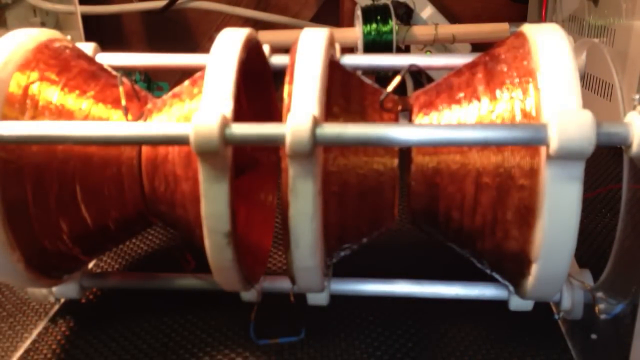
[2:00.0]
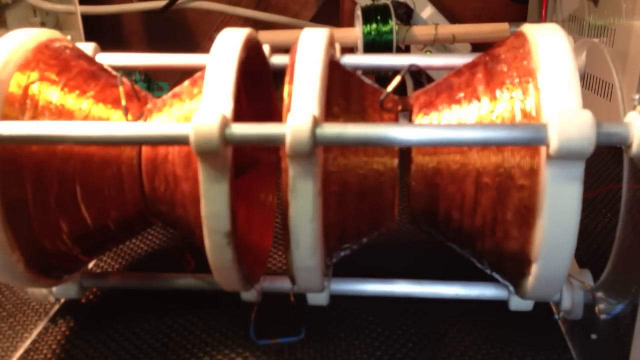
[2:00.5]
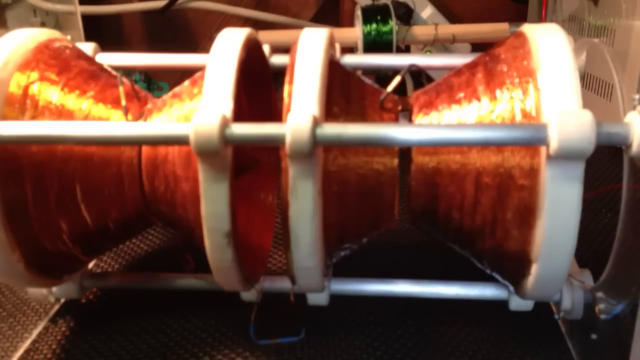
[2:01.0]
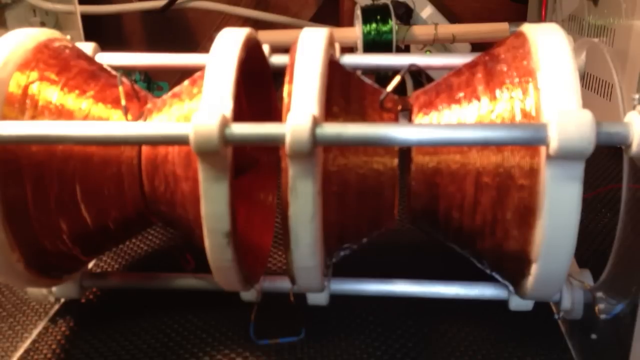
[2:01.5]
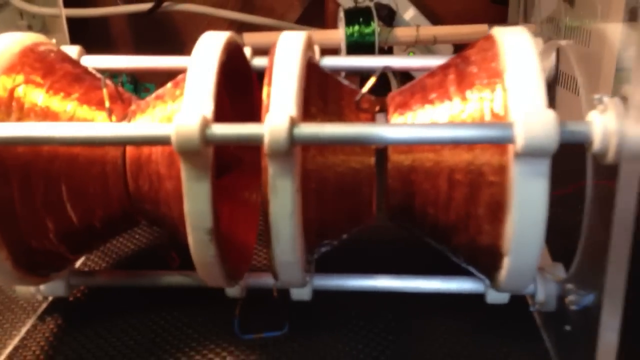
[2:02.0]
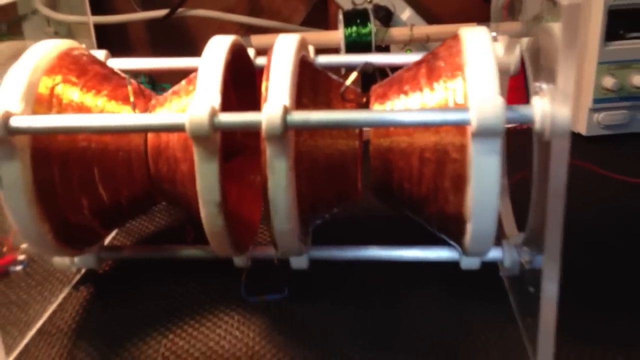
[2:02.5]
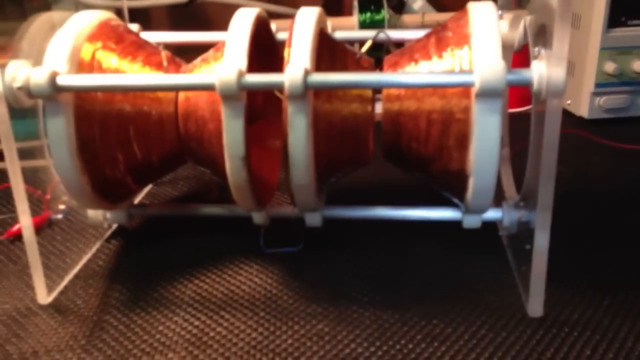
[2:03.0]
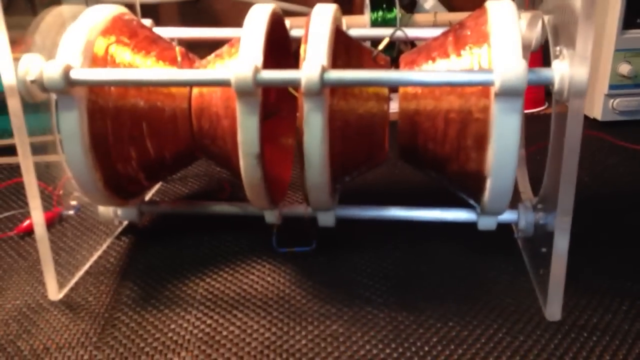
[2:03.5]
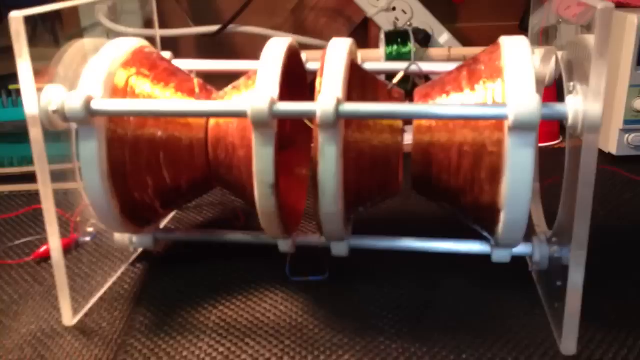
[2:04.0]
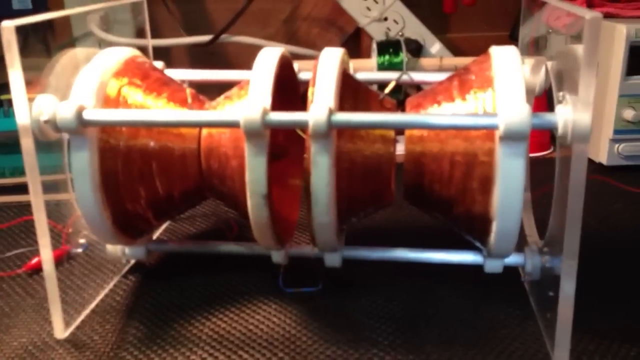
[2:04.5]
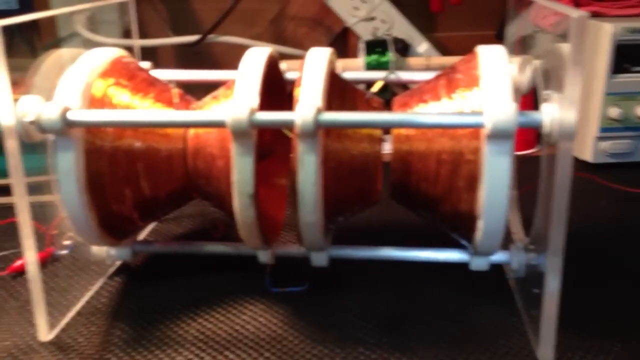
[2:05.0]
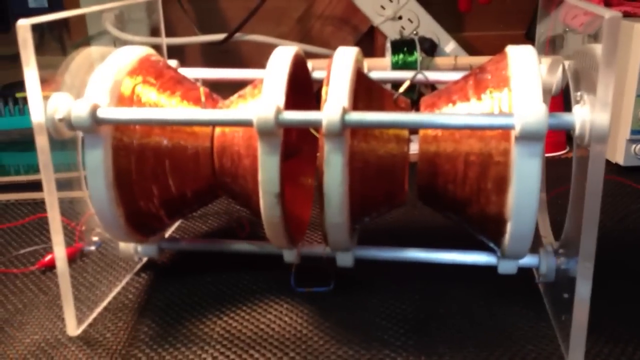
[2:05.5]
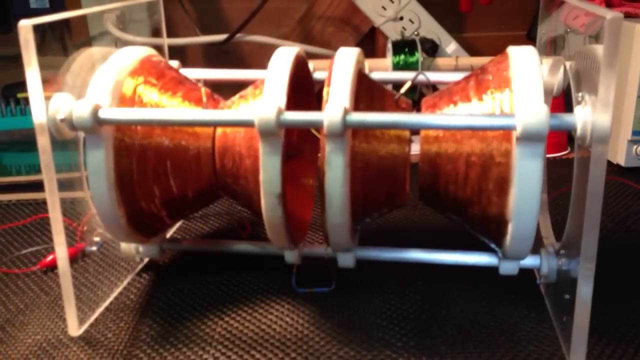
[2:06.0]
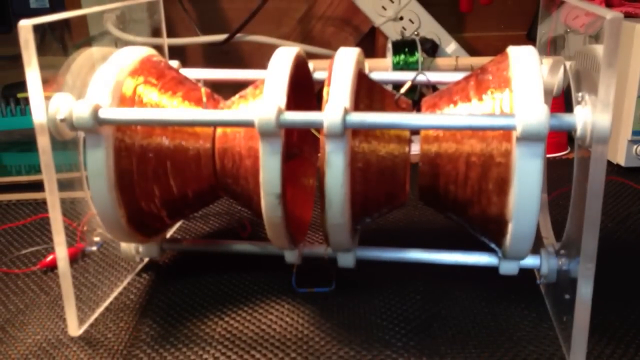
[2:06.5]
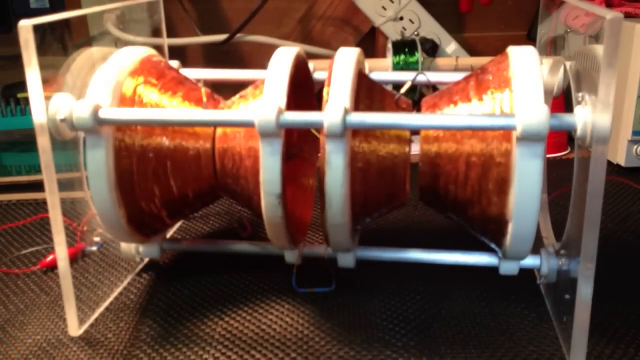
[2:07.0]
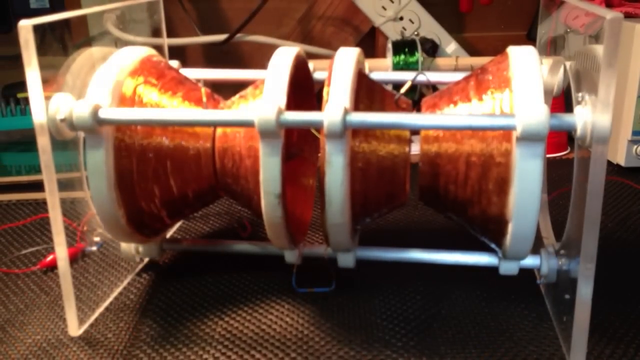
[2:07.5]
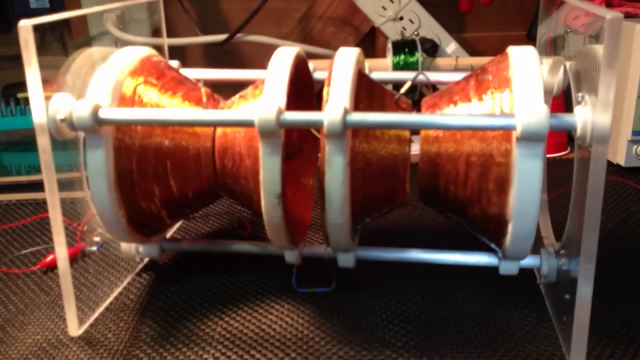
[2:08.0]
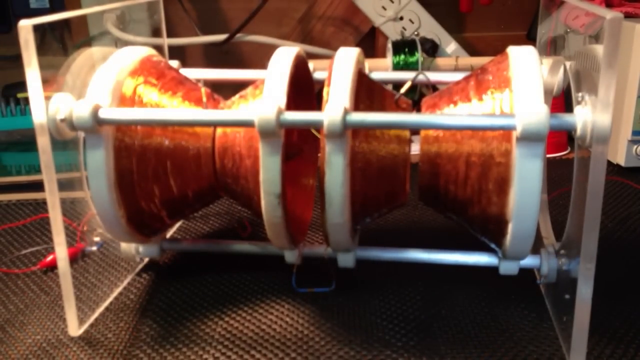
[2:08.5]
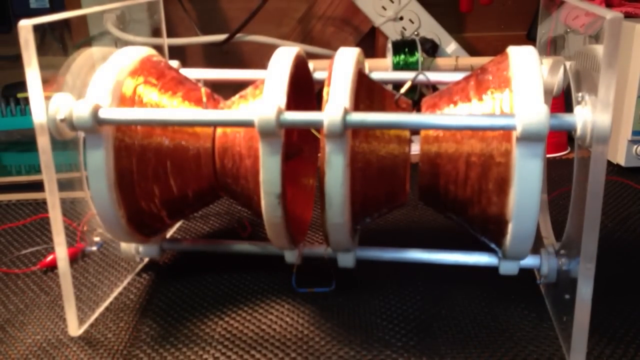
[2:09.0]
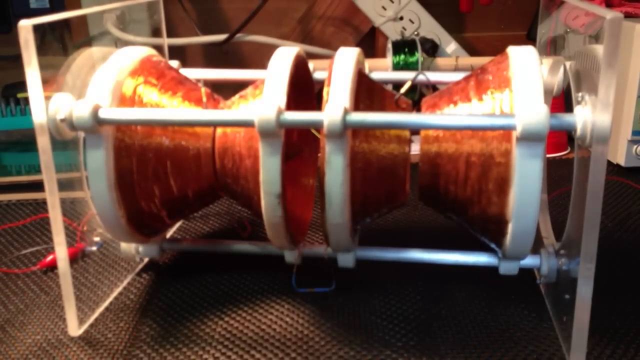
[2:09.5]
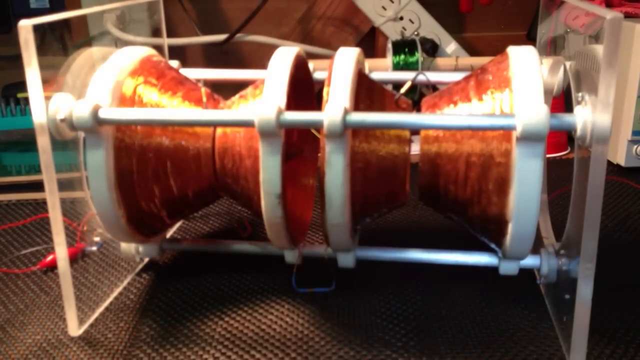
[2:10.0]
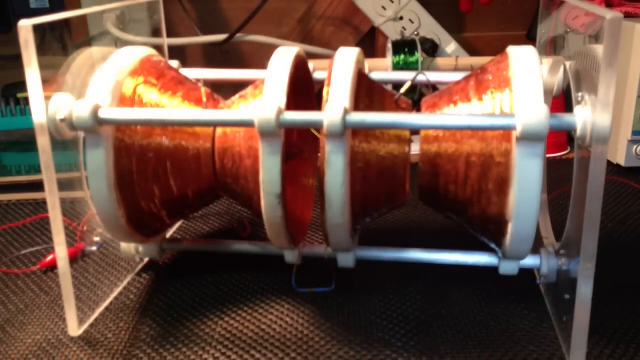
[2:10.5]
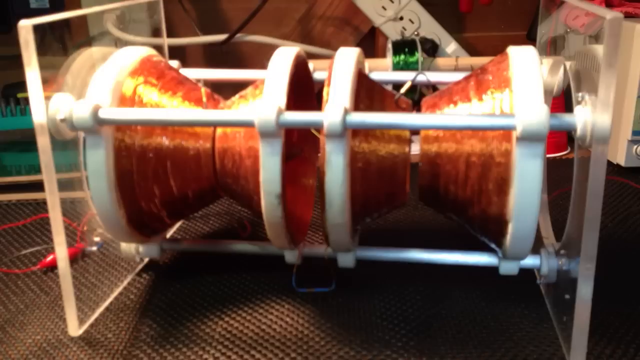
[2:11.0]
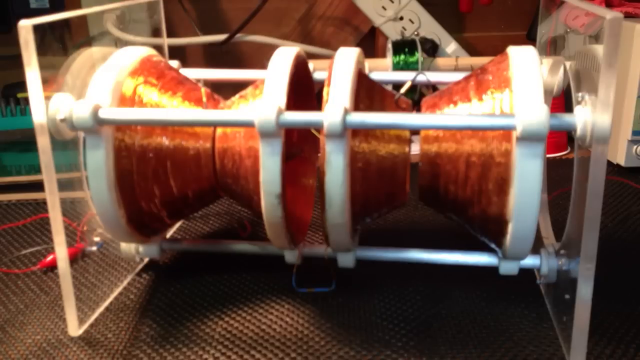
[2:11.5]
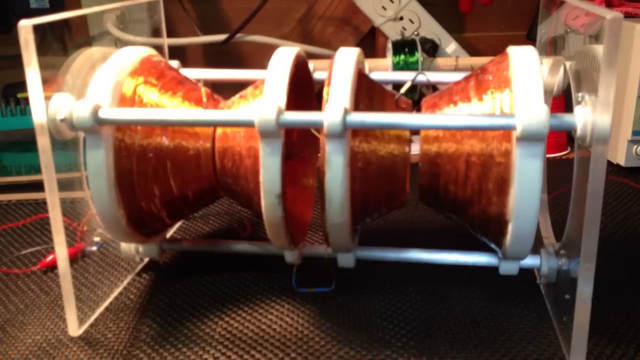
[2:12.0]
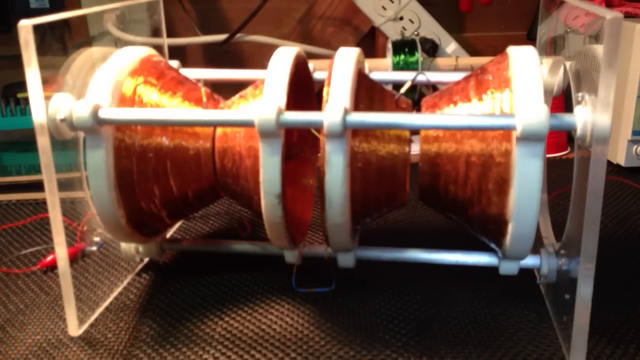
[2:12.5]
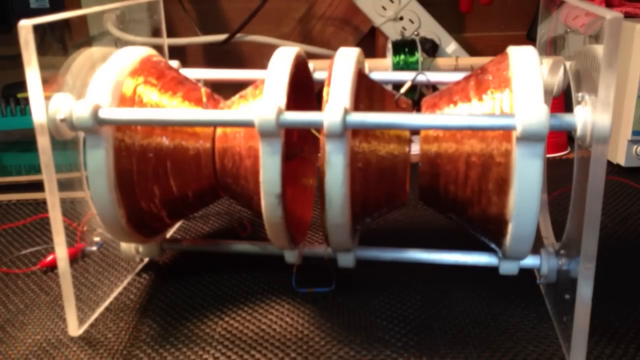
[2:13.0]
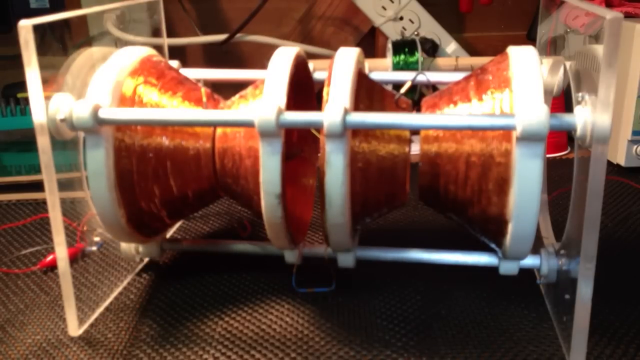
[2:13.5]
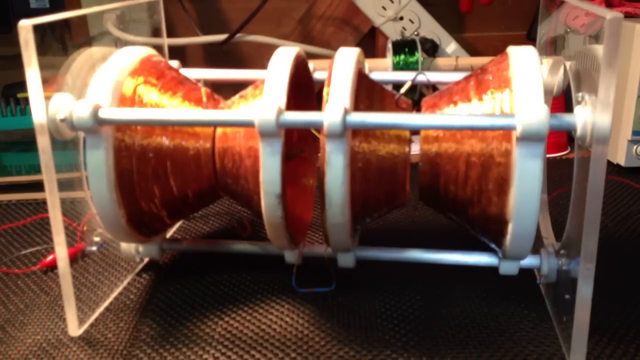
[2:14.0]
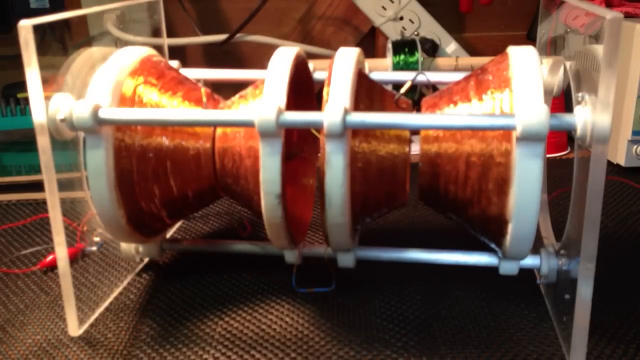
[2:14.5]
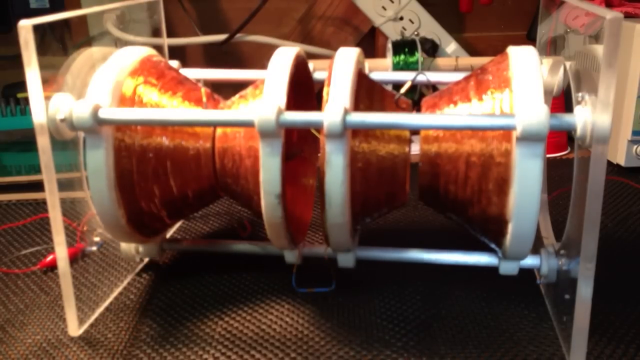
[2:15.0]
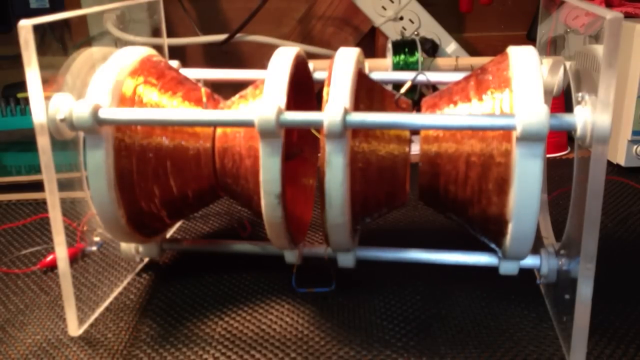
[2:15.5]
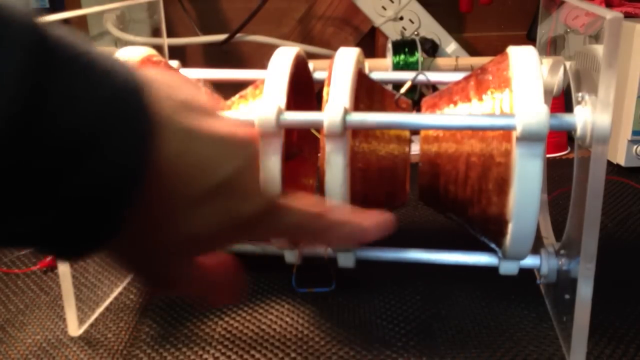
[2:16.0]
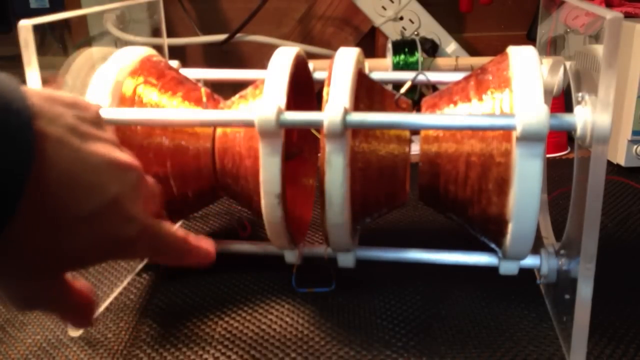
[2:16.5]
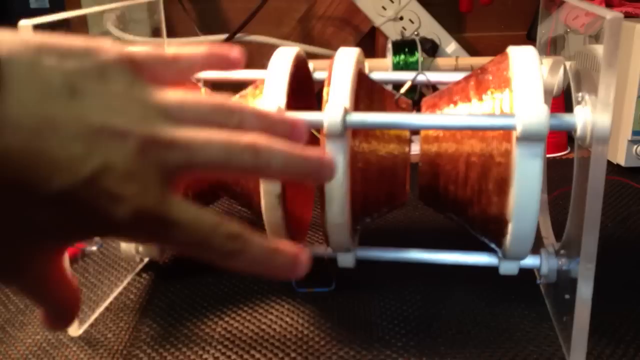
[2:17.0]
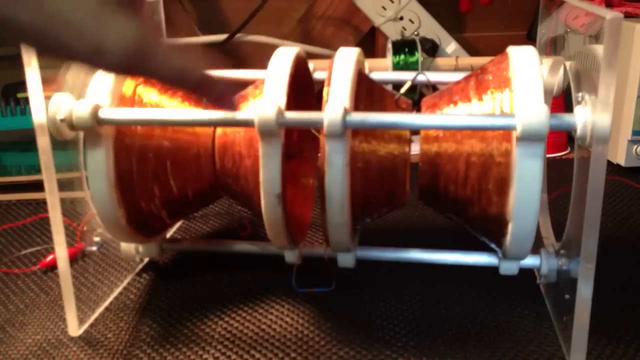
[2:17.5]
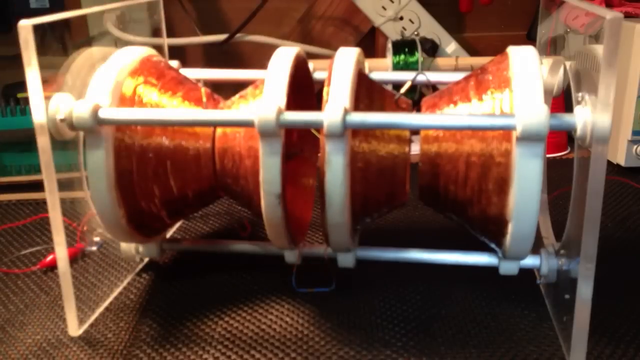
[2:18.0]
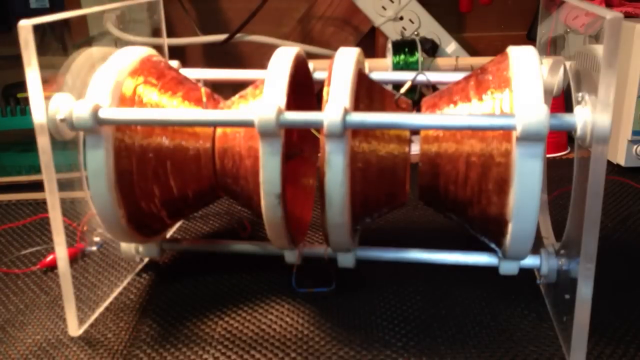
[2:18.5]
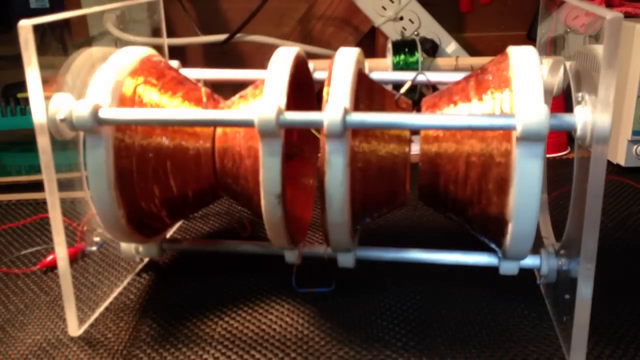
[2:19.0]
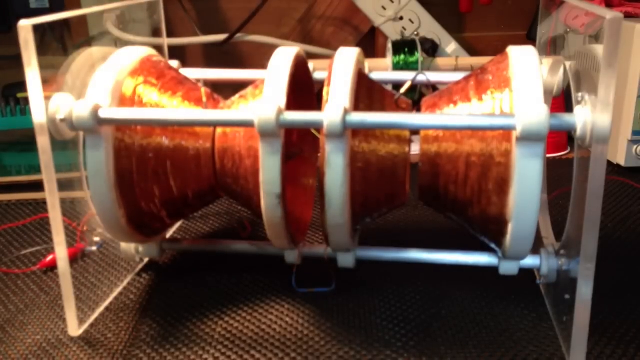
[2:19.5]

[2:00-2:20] The view is slightly zoomed out as he adjusts the camera to show the whole apparatus, including the plastic or perspex sides, and the camera is then fixed. His left hand points toward the bottom of the device with the palm open, making another gesturing motion.